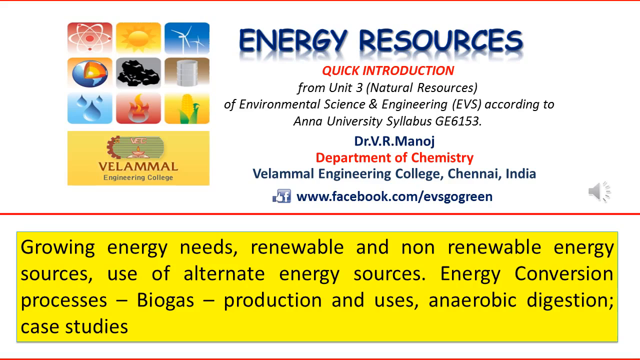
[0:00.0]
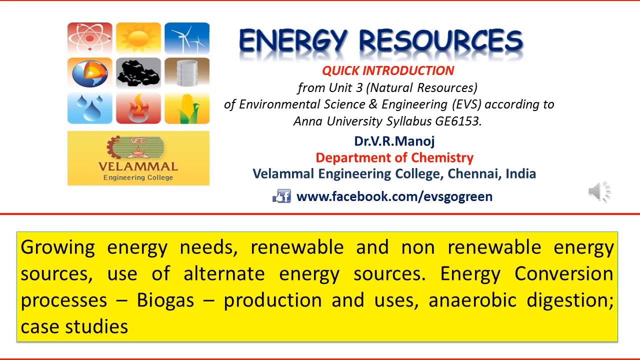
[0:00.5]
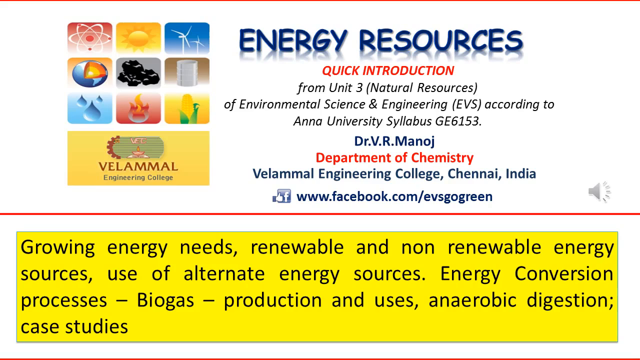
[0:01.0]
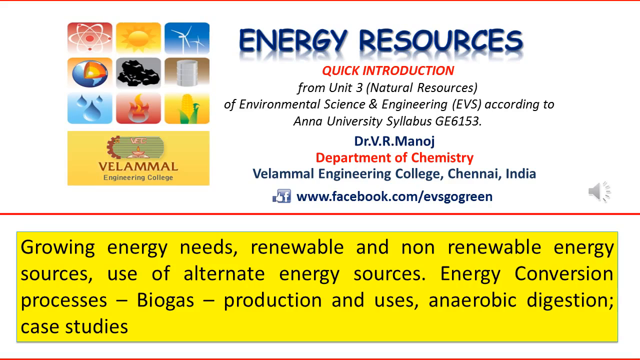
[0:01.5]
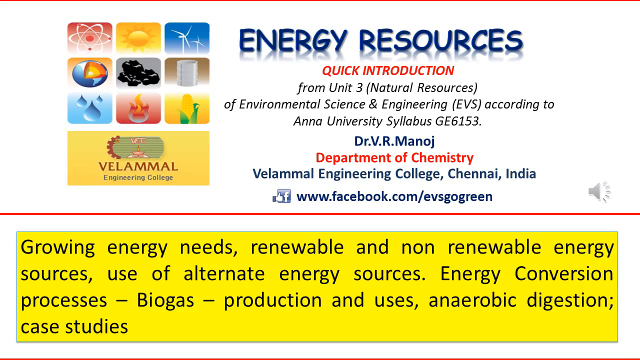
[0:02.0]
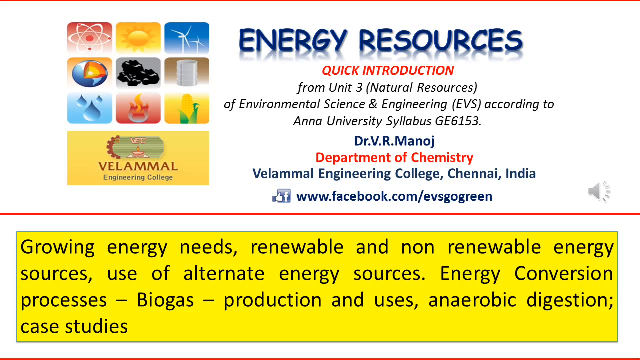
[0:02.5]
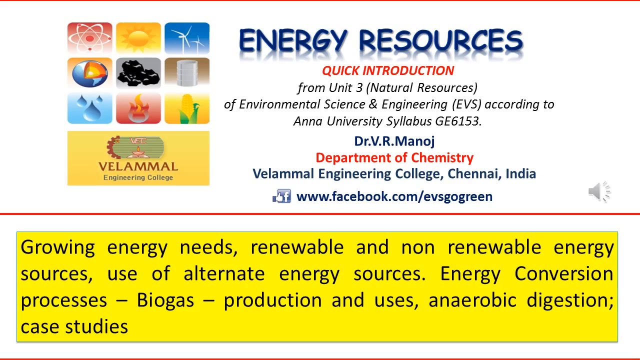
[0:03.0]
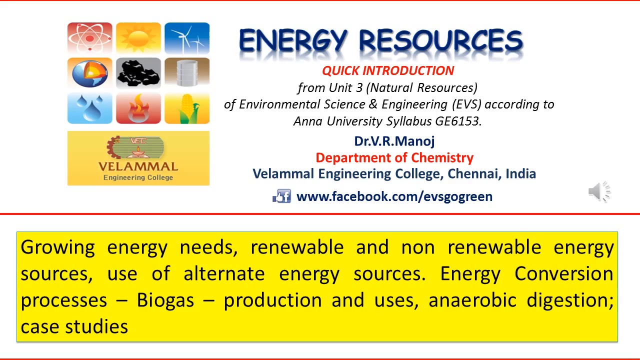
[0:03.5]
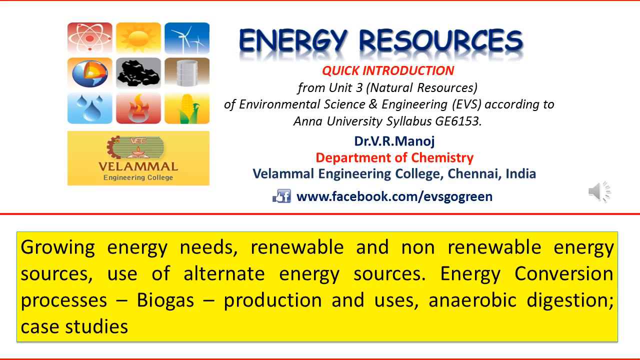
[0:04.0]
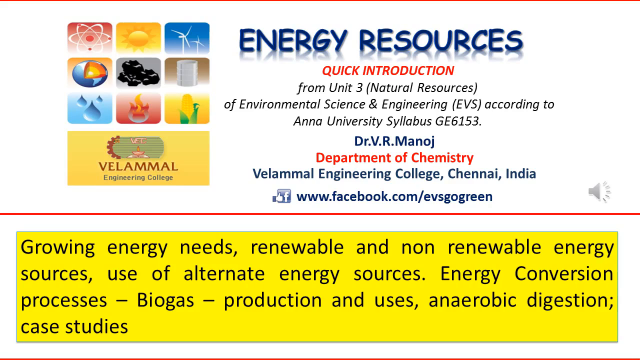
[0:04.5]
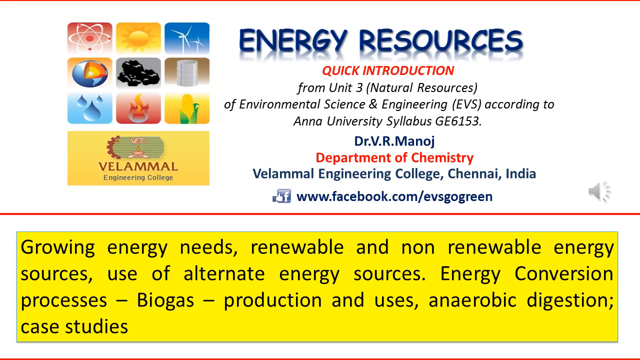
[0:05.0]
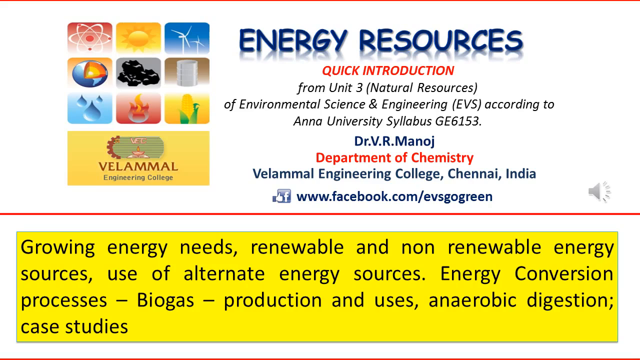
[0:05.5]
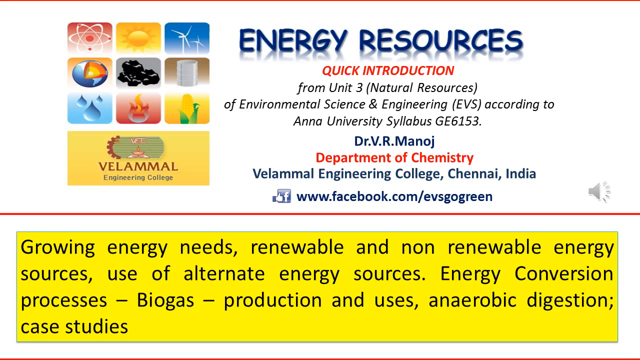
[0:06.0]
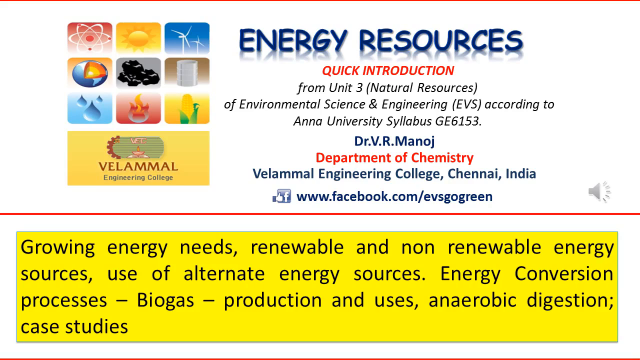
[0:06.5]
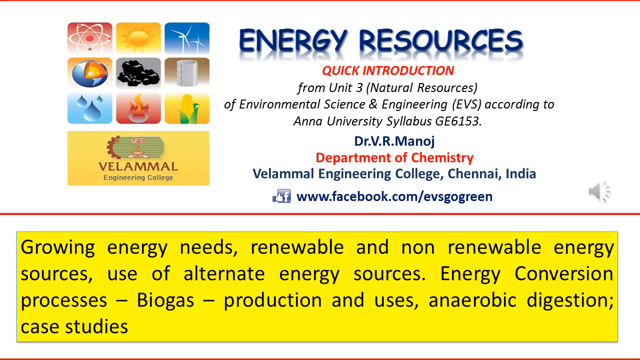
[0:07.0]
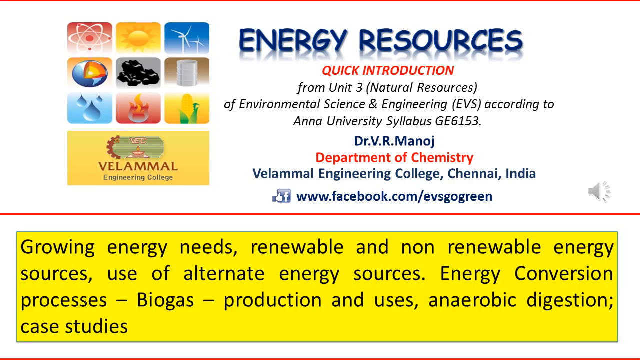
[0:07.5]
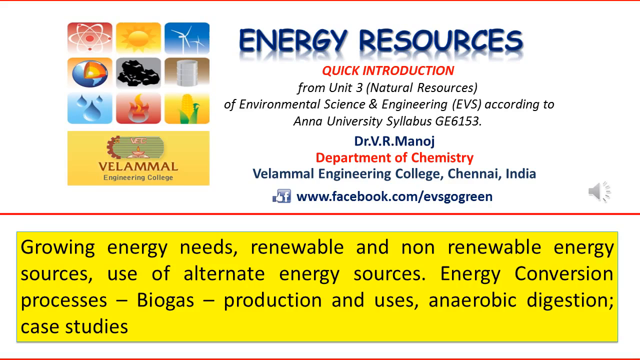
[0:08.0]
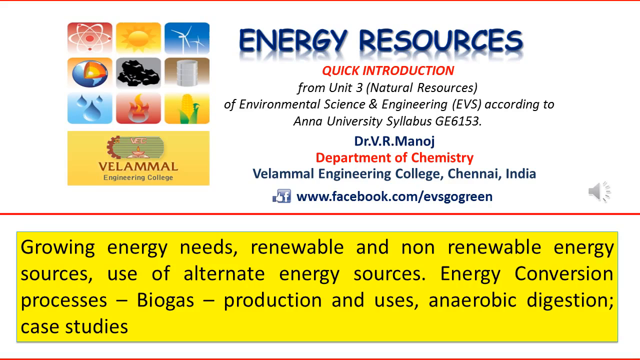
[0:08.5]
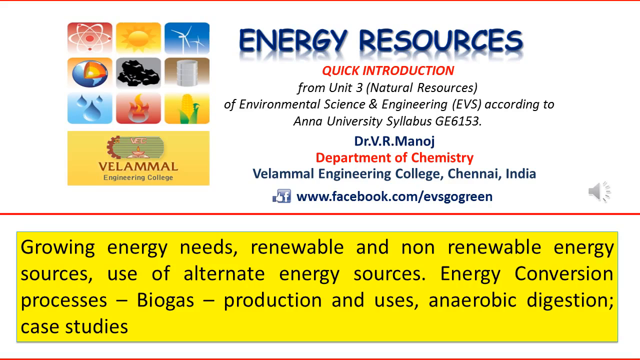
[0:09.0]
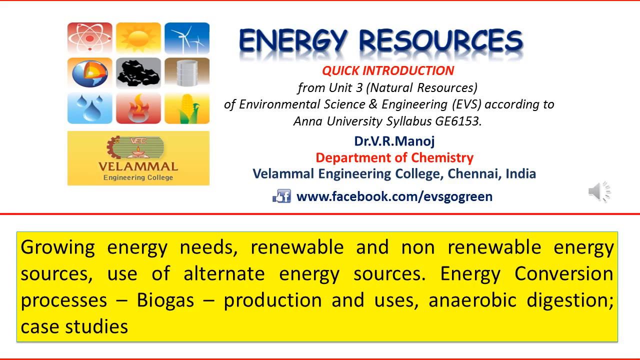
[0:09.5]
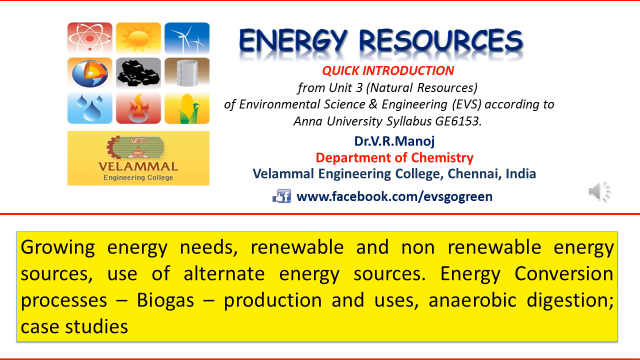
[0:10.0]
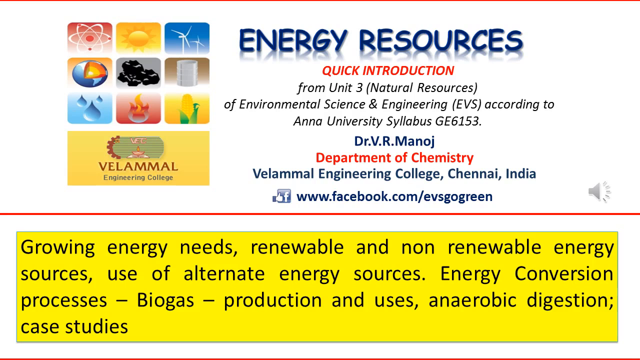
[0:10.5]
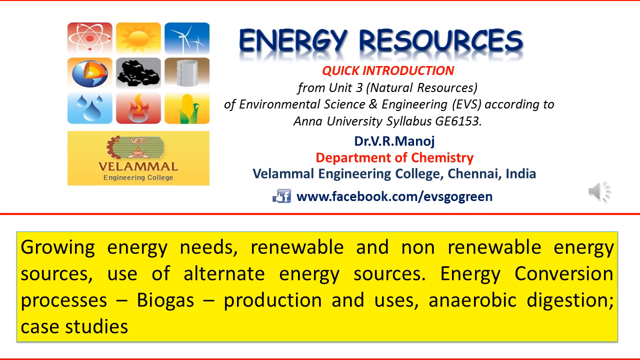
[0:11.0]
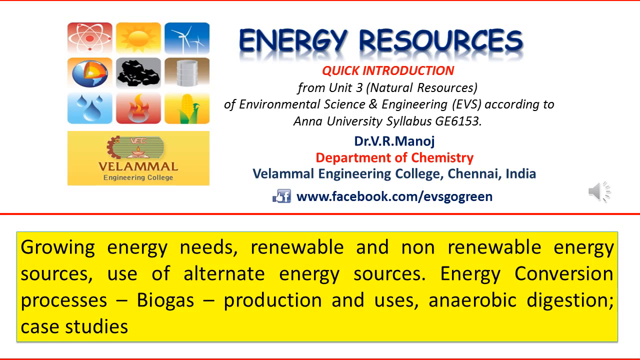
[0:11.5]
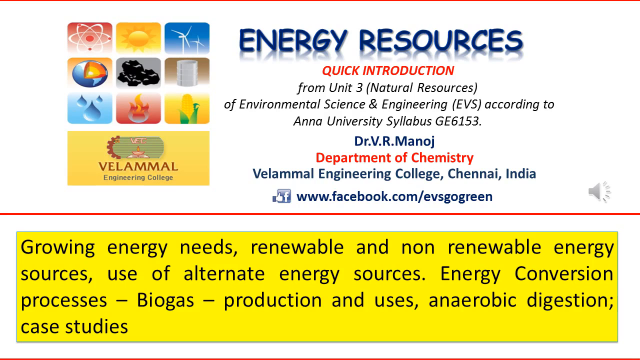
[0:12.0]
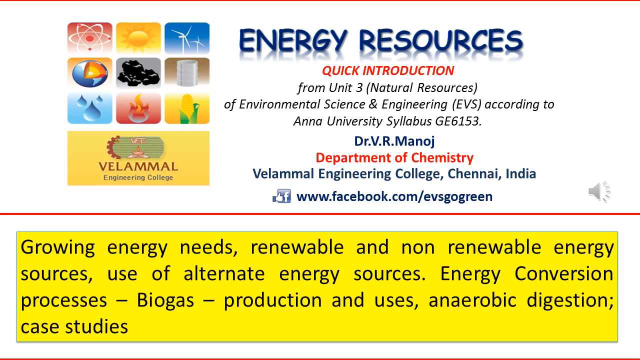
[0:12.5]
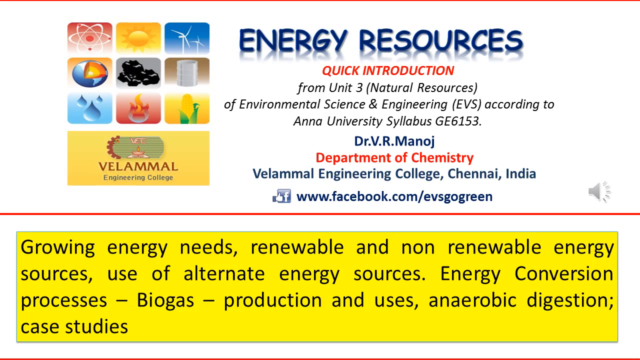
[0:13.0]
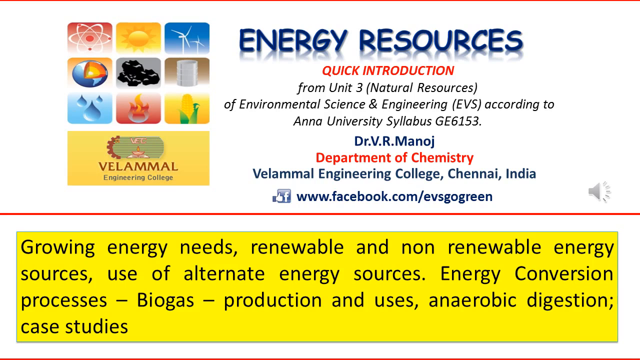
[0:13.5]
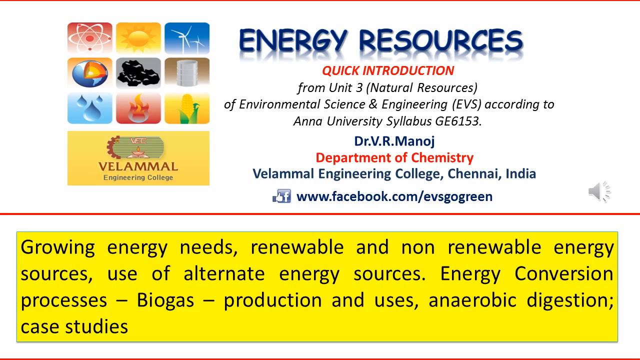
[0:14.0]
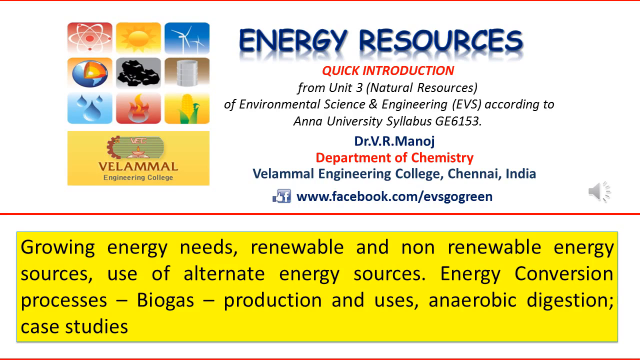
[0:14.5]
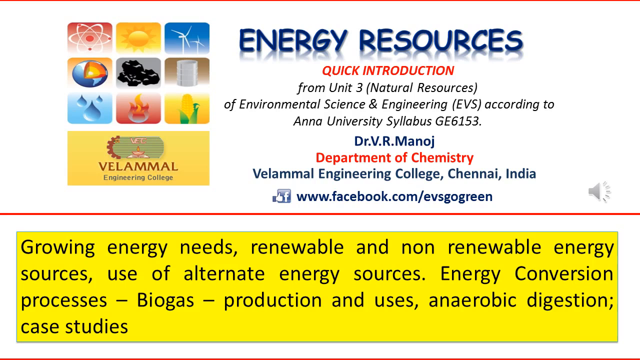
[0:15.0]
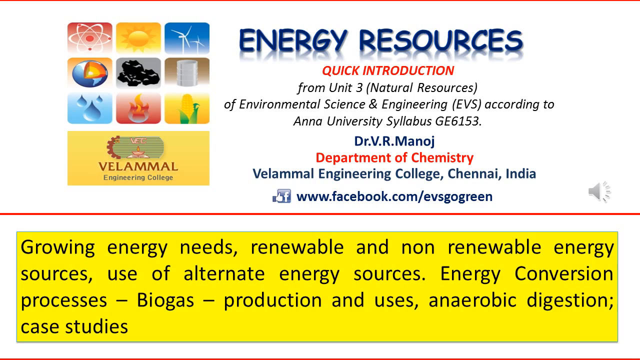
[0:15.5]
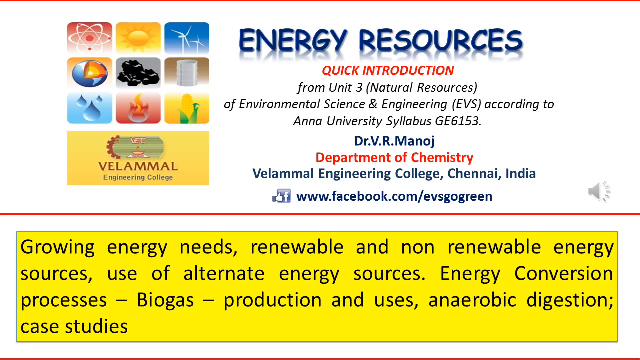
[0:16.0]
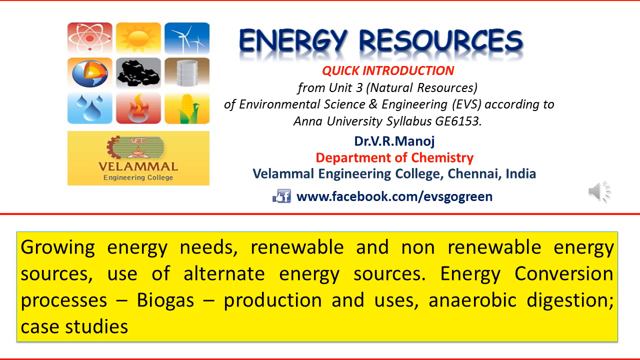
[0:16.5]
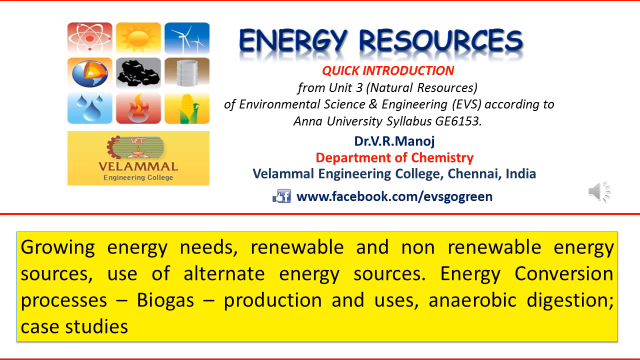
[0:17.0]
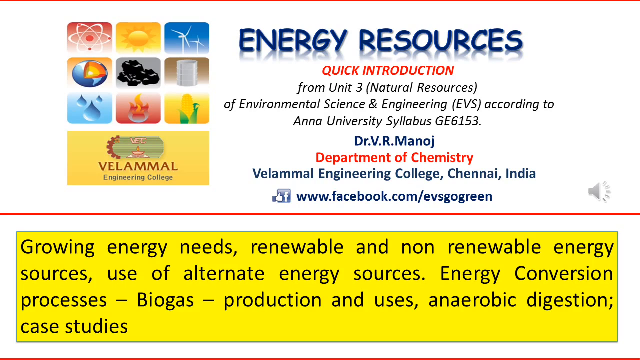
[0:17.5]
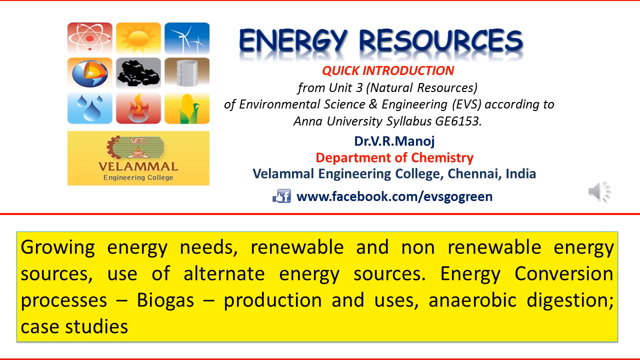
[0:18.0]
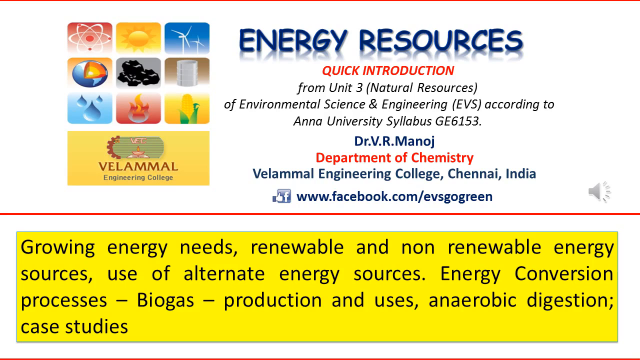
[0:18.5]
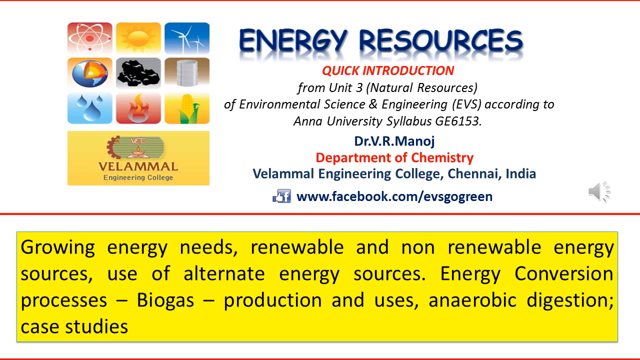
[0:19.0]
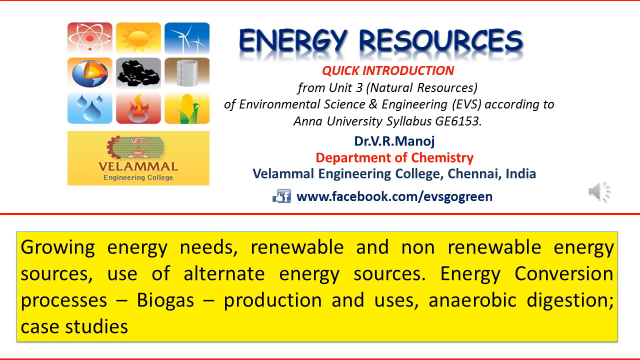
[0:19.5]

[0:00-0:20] The video opens with the words "energy resources" in dark blue text at the top center. Below, in small red text, it reads "quick introduction", followed by "from unit 3 natural resources of environmental science and engineering according to Anna University syllabus". The instructor is listed as Dr. B. R. Manoj, Department of Chemistry, and a Facebook link is provided. A bright yellow banner at the bottom reads "growing energy needs, renewable and non-renewable energy resources, use of alternate energy sources, energy conversion processes, biogas production and uses, anaerobic digestion. case studies." In the upper left corner is an illustration made up of nine images, all reflecting science and resources, such as water droplets, windmills, the sun and corn. The instructor works at Balammal Engineering College in India, and the class is GE6153.